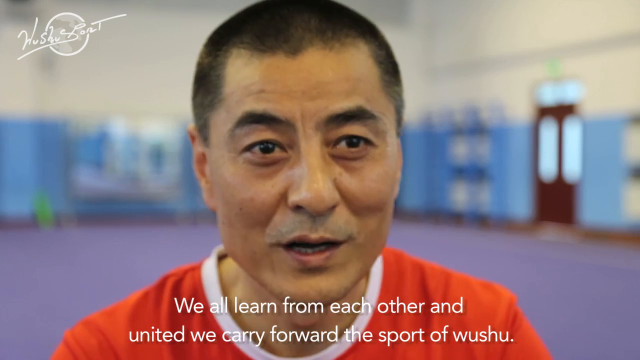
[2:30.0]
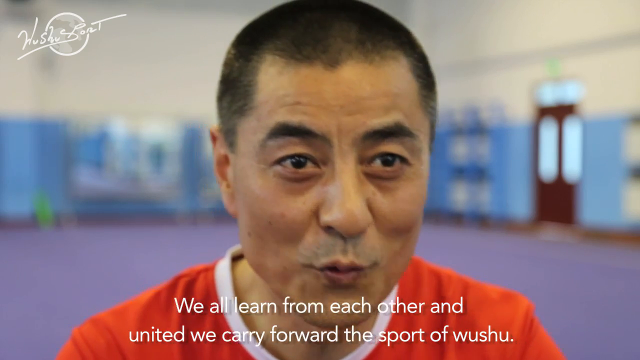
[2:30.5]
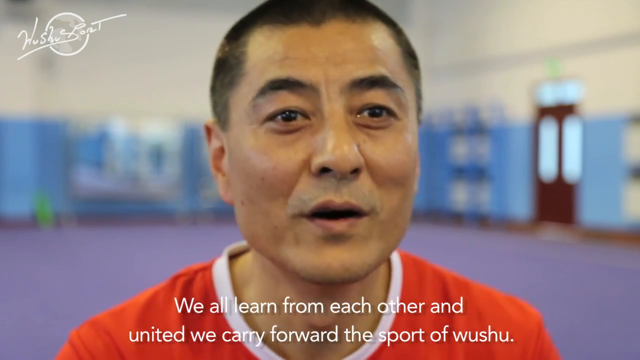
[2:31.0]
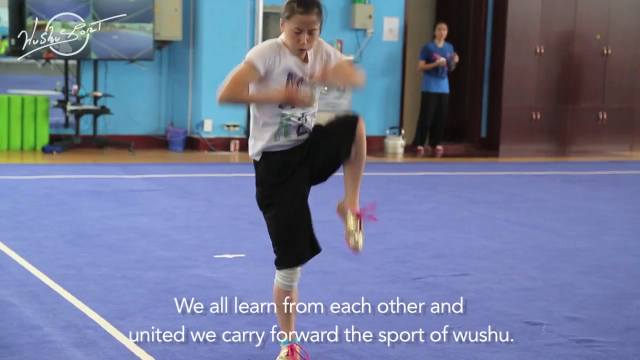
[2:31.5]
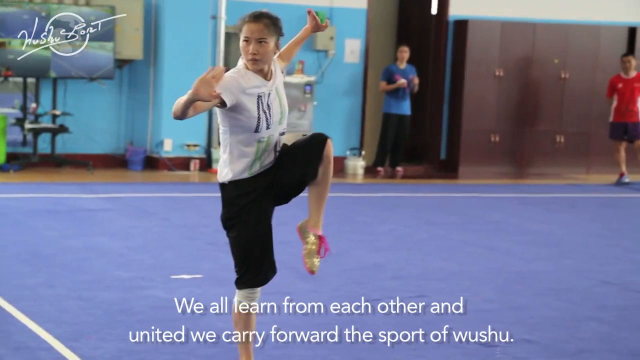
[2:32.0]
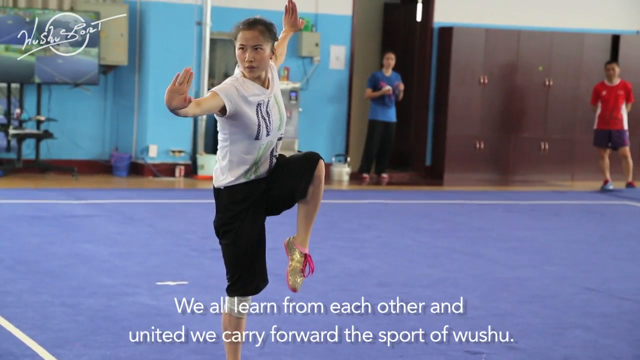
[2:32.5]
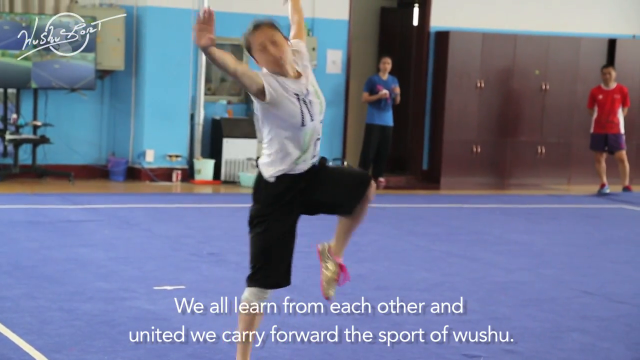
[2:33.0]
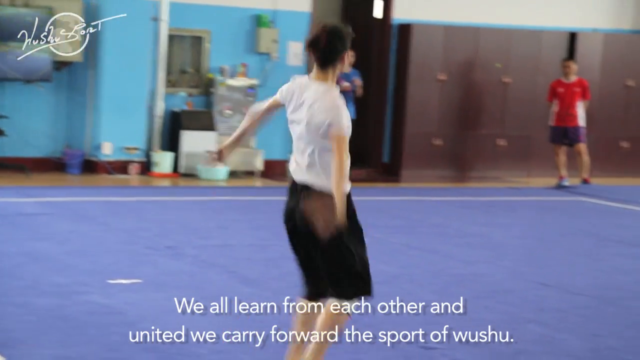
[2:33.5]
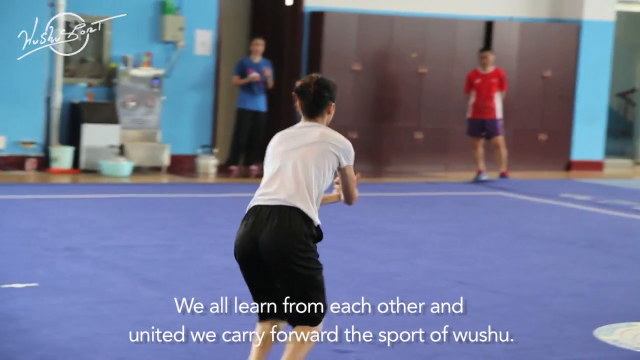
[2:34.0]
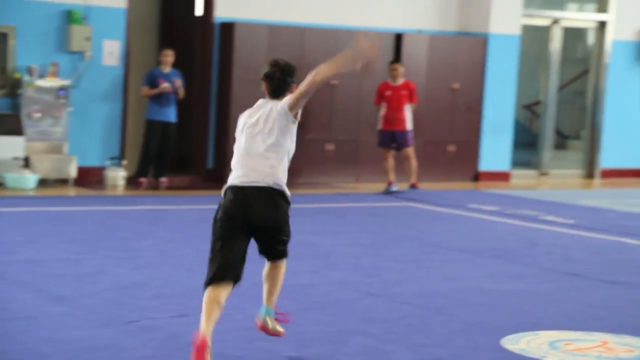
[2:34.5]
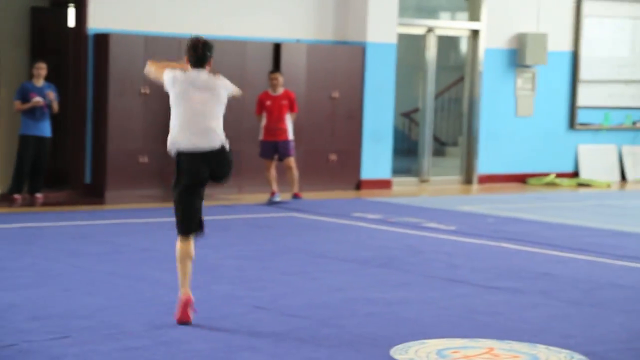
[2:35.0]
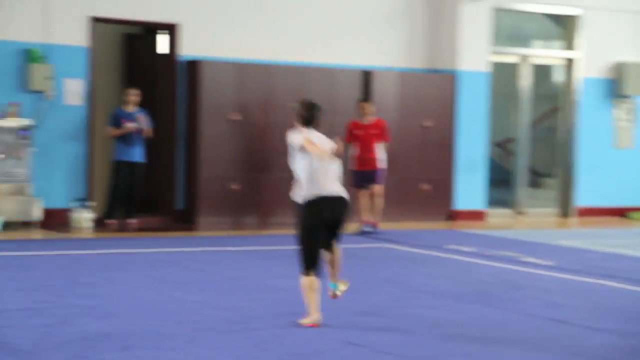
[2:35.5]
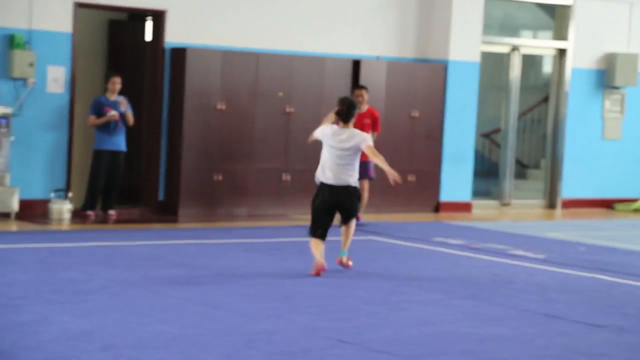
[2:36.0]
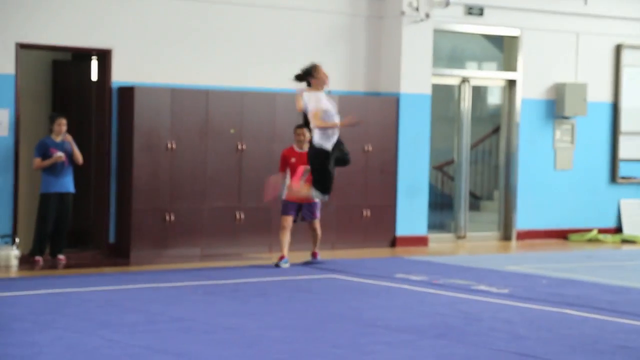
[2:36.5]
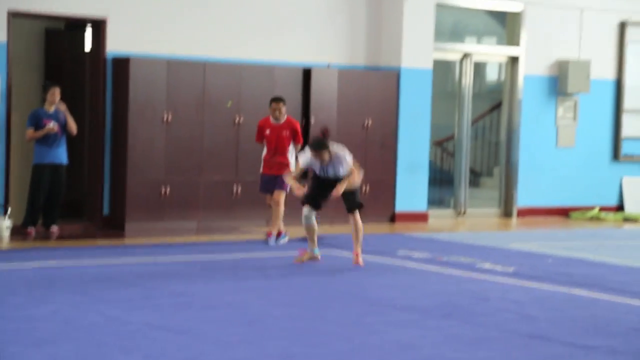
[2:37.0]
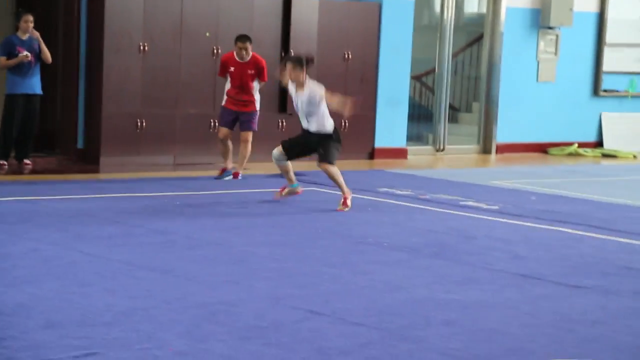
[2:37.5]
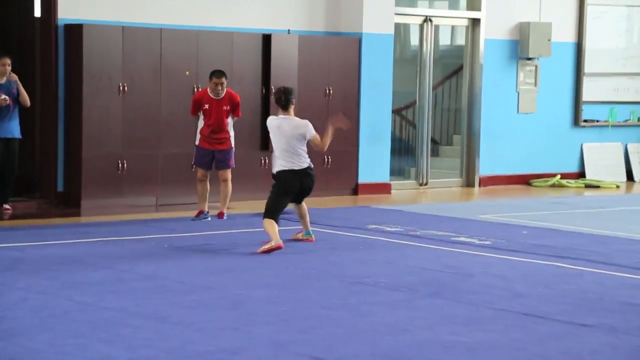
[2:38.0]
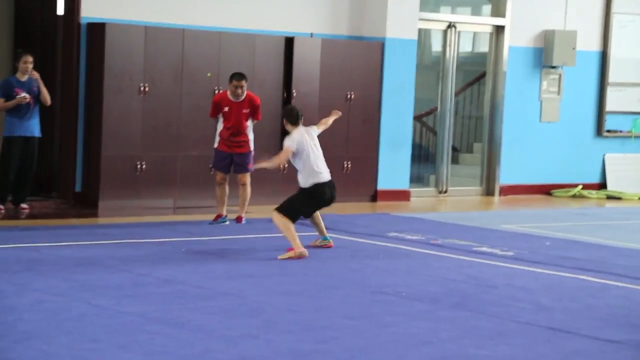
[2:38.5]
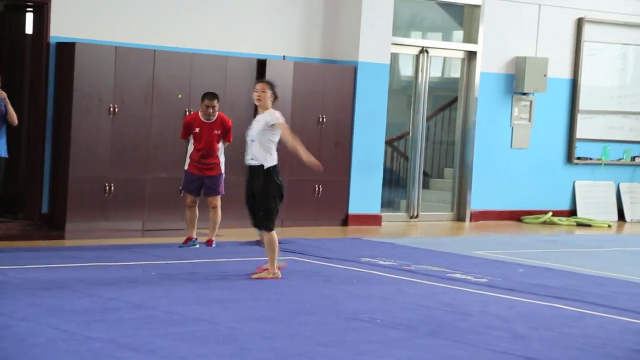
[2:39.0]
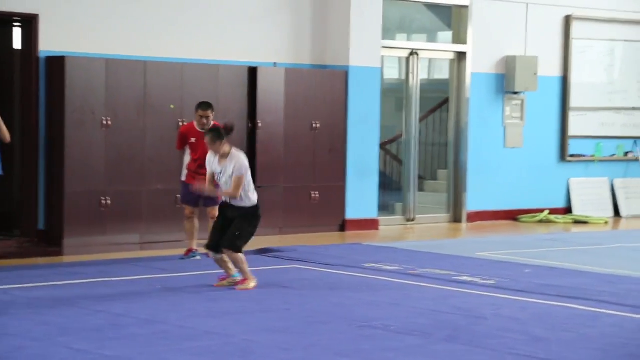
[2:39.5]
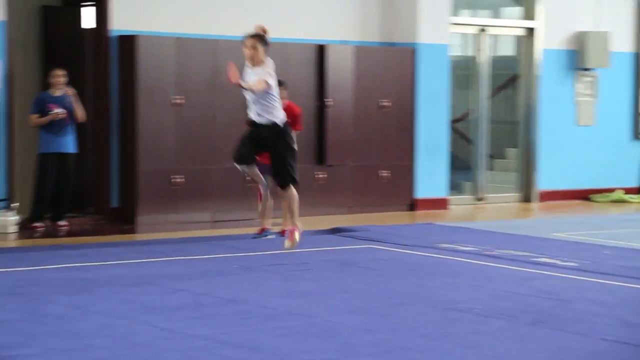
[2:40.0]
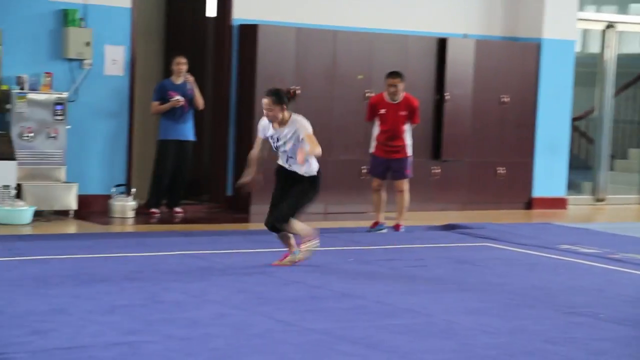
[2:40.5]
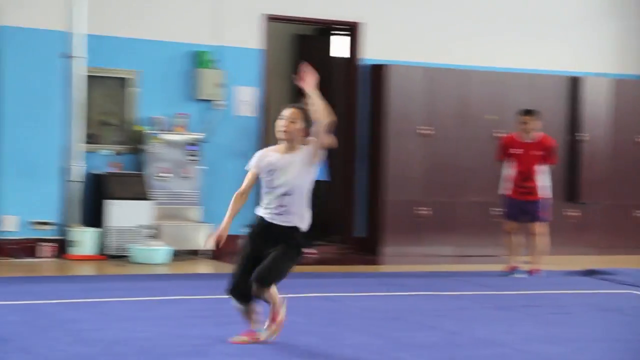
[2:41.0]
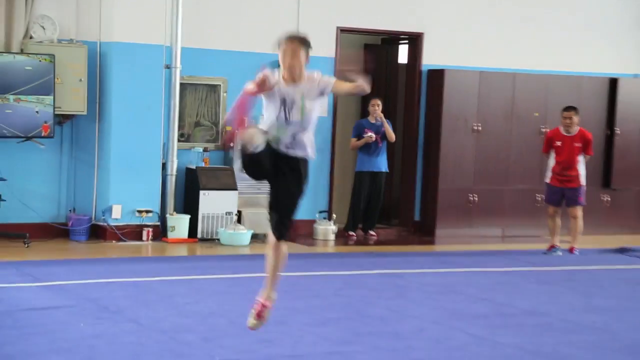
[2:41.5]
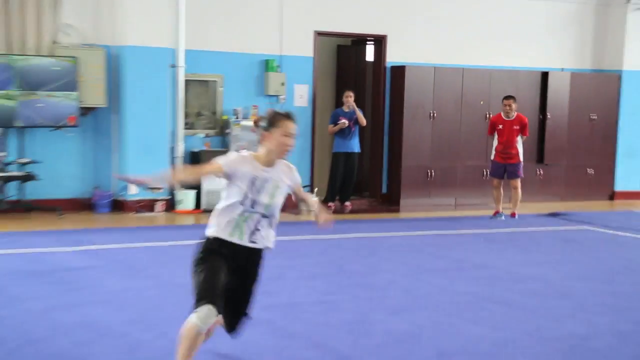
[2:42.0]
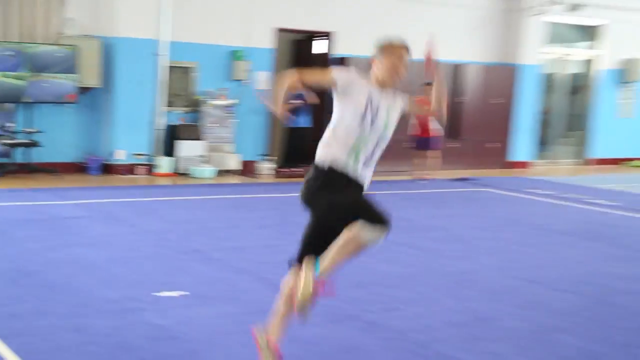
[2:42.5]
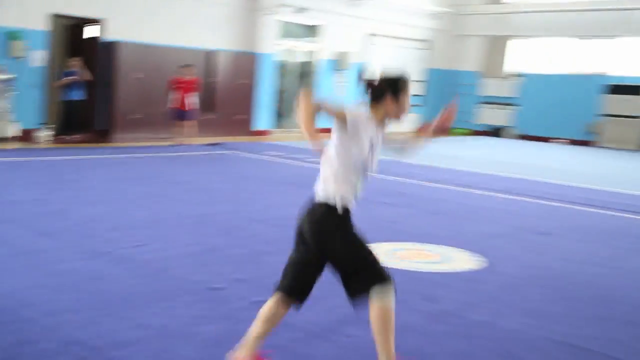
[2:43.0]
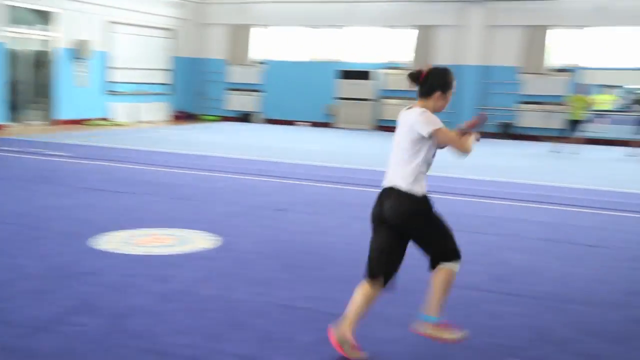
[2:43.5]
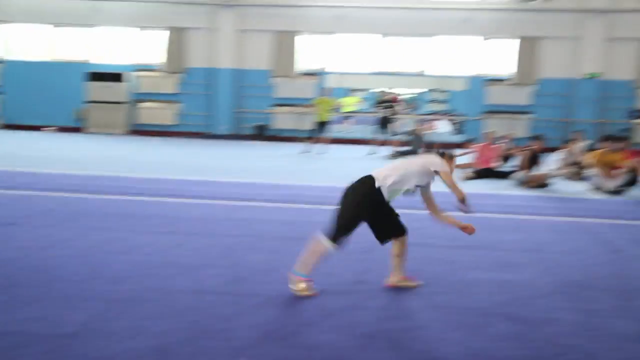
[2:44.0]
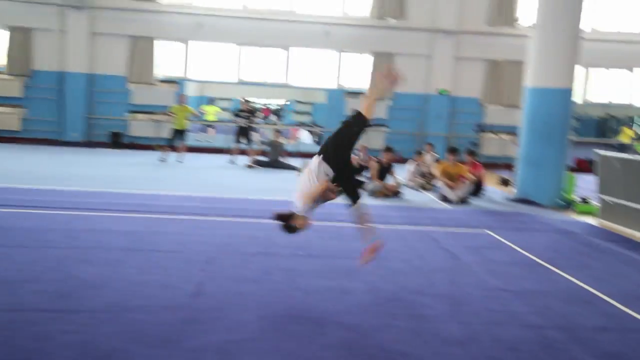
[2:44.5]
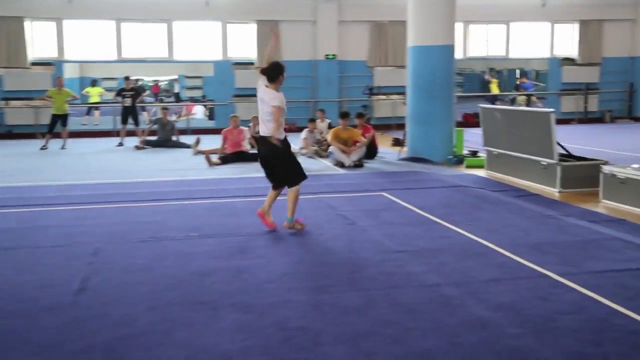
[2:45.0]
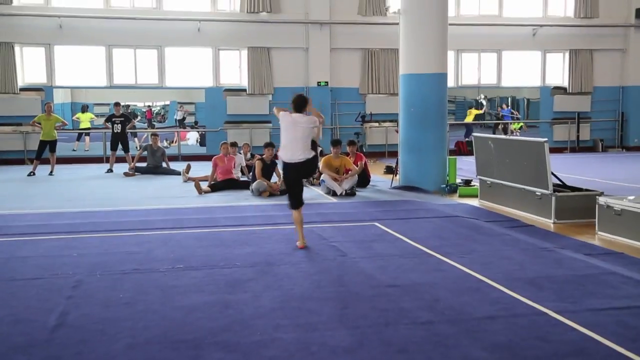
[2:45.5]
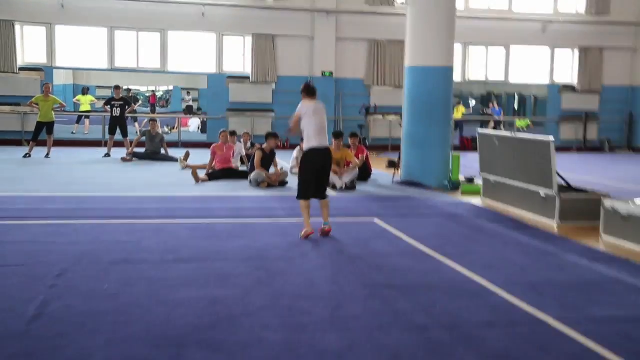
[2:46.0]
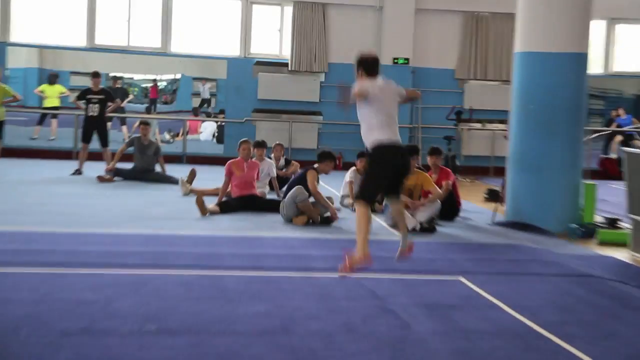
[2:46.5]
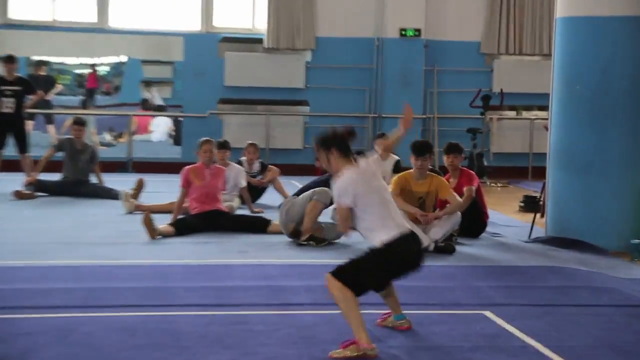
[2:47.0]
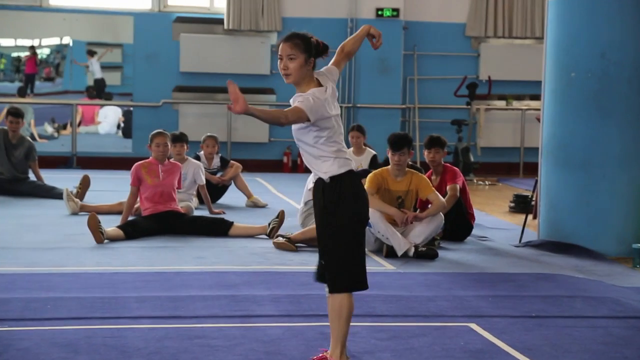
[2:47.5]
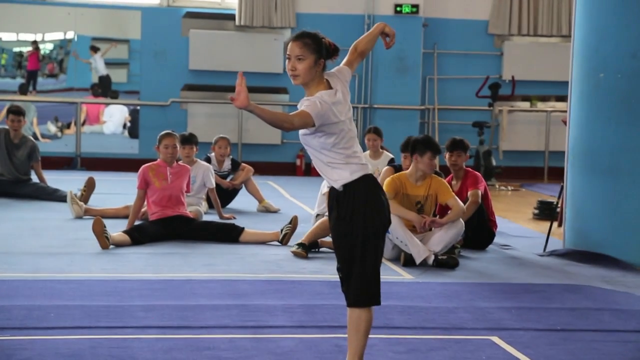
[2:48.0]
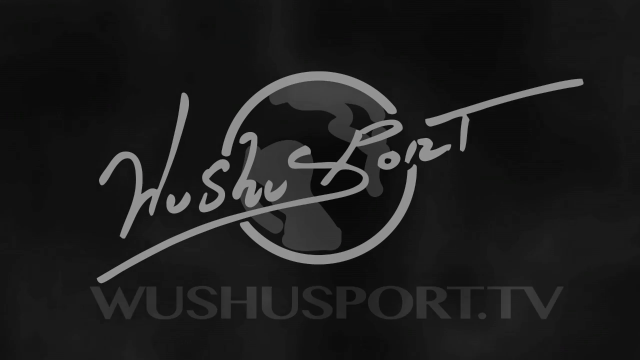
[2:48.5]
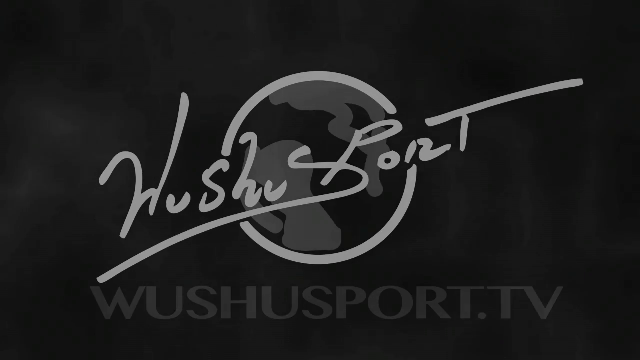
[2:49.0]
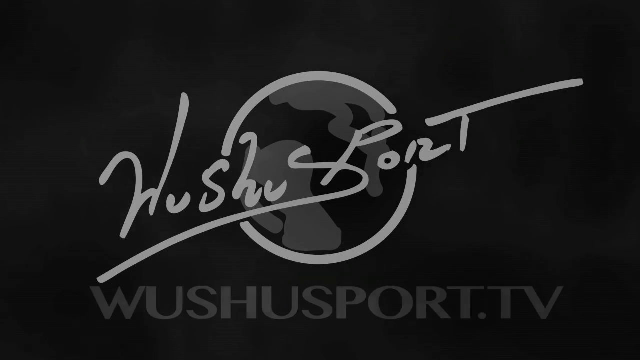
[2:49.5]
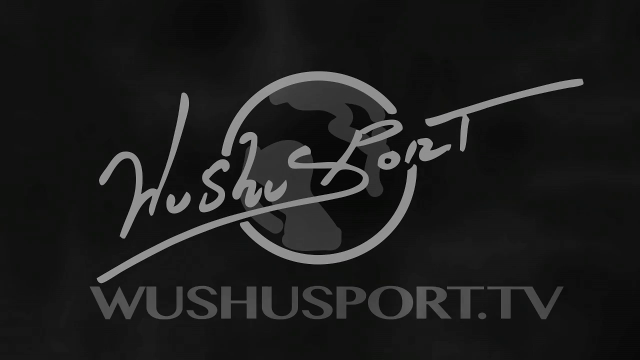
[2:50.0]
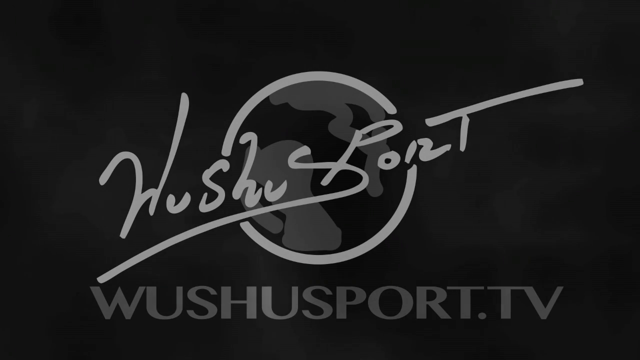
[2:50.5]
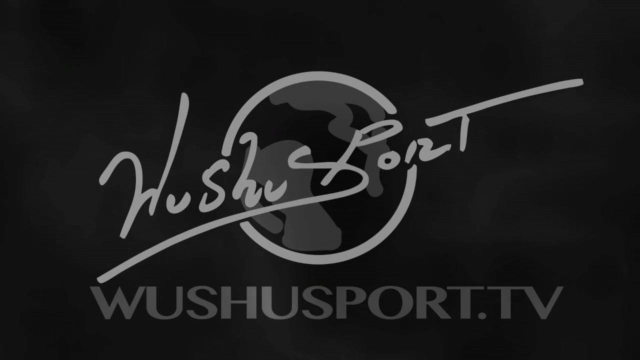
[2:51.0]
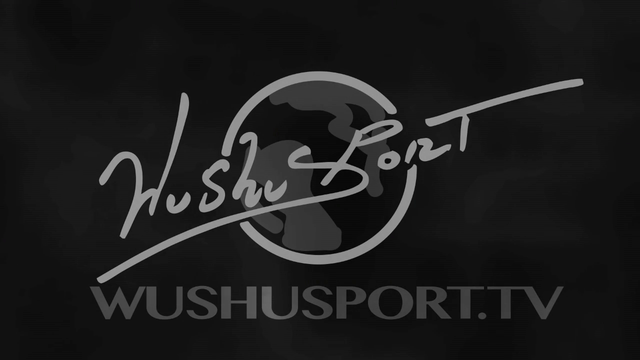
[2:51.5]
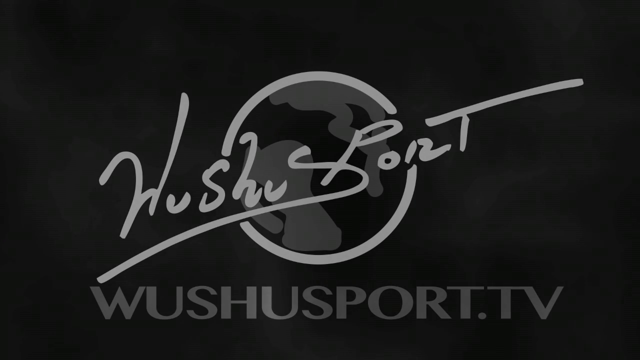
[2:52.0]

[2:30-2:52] A Chinese man with short black hair, wearing a red shirt with a white collar, speaks directly into the camera in a room with walls white on the top half and blue on the bottom half and a big purple mat floor. Captions at the bottom of the screen read "we all learn from each other and united we carry forward the sport of wushu". The video cuts to a girl in a white short-sleeved shirt, black shorts and pink shoes running on the mat, jumping, spinning and sticking her arms out when she lands. She then takes off in the opposite direction, runs and jumps, sticking her arms straight out and posing in the air. A few other people around the area watch her.